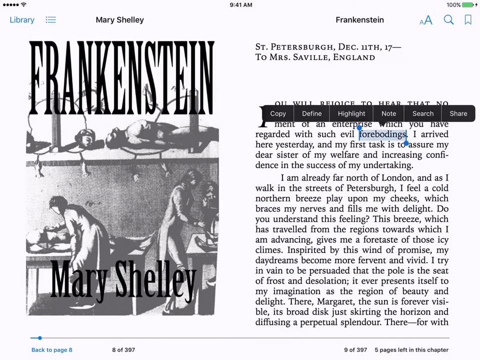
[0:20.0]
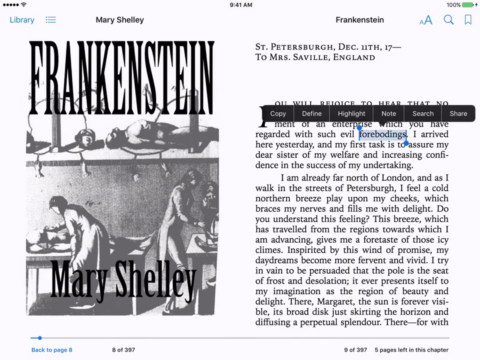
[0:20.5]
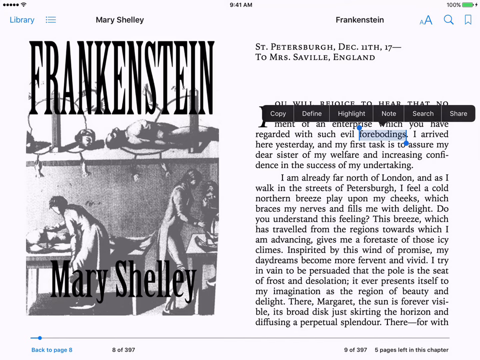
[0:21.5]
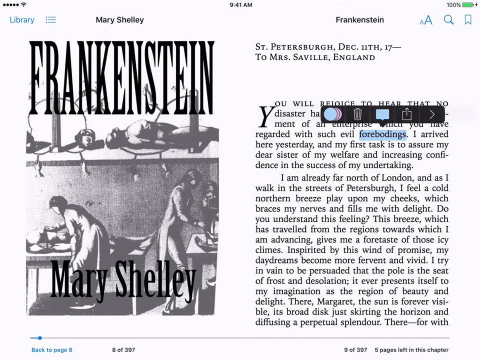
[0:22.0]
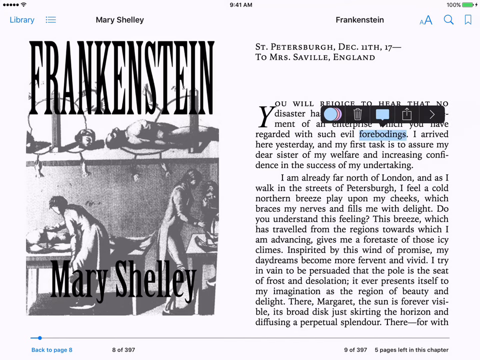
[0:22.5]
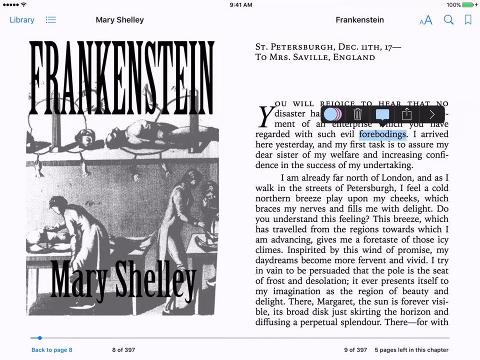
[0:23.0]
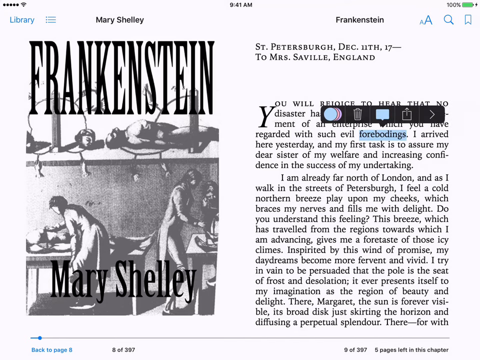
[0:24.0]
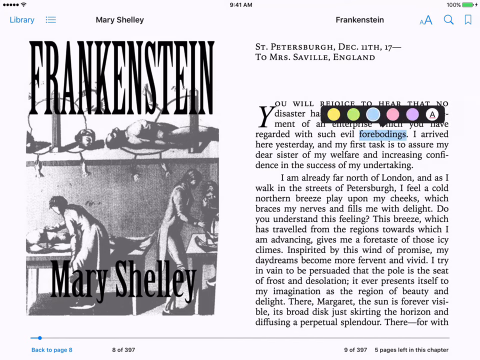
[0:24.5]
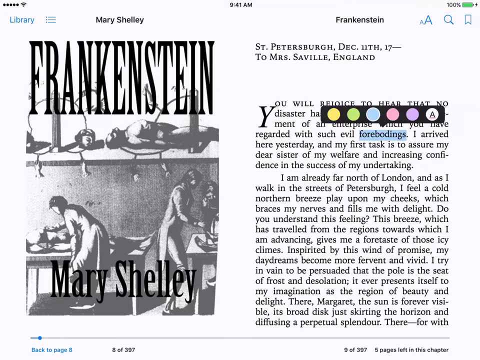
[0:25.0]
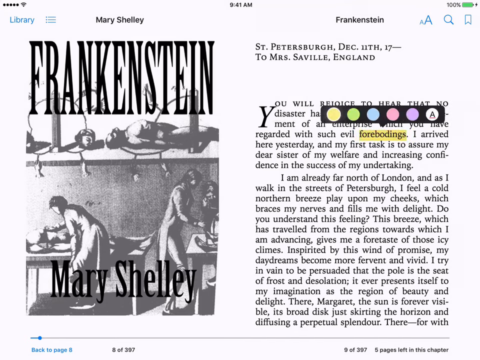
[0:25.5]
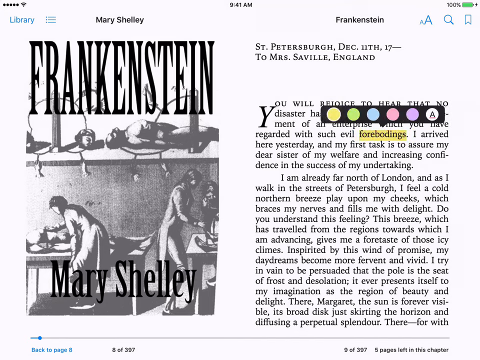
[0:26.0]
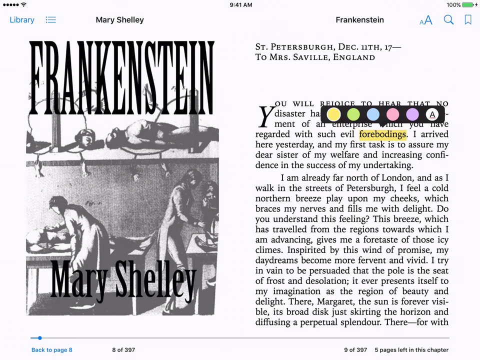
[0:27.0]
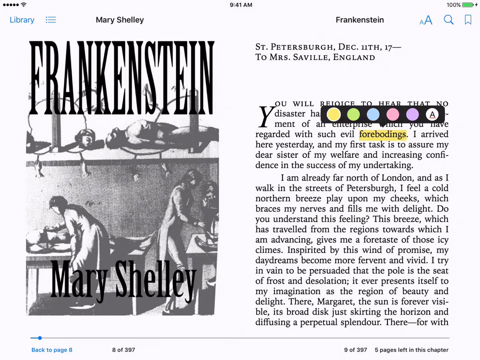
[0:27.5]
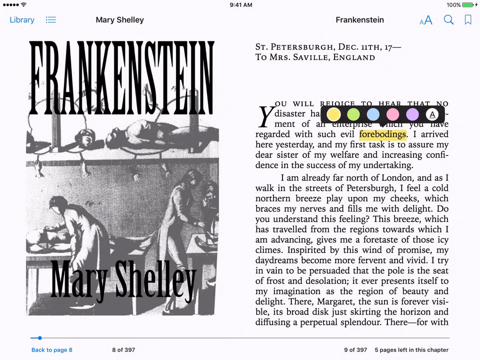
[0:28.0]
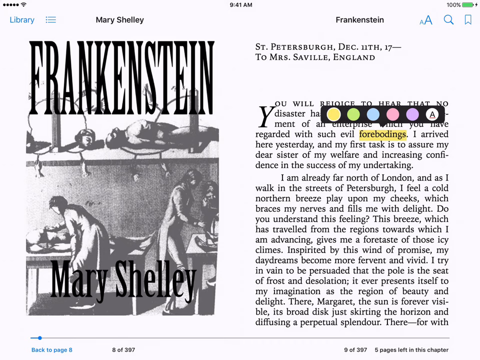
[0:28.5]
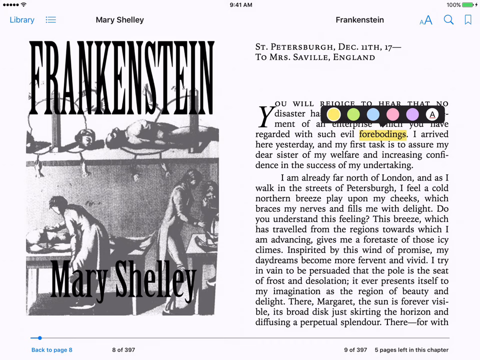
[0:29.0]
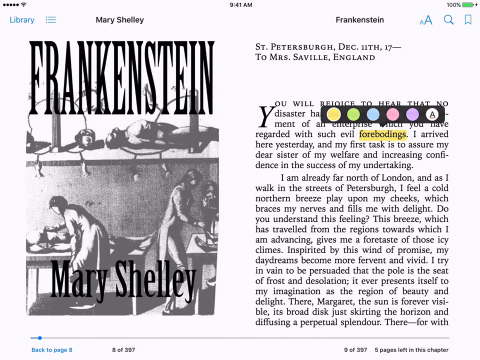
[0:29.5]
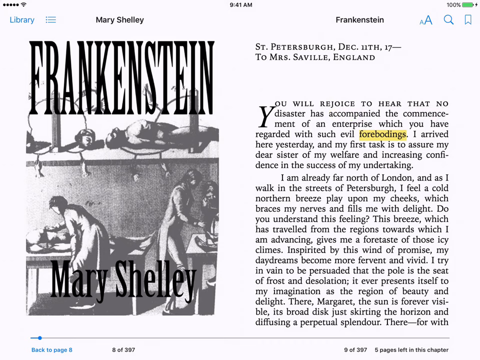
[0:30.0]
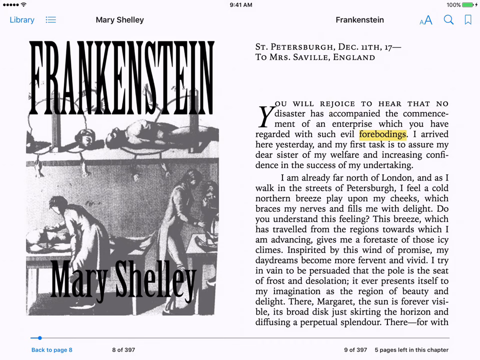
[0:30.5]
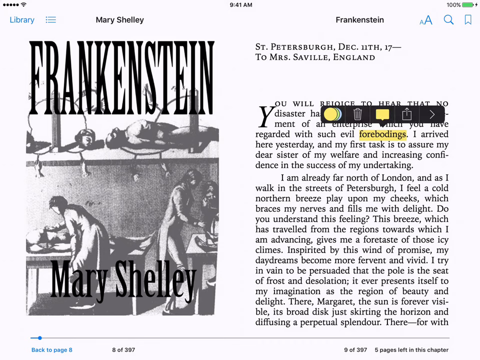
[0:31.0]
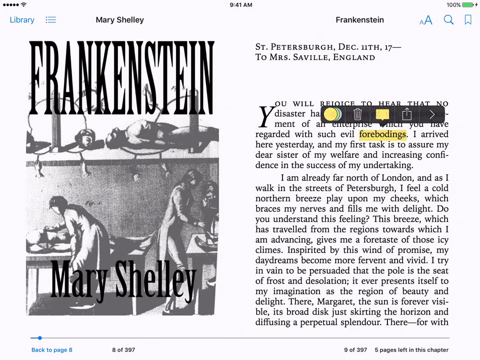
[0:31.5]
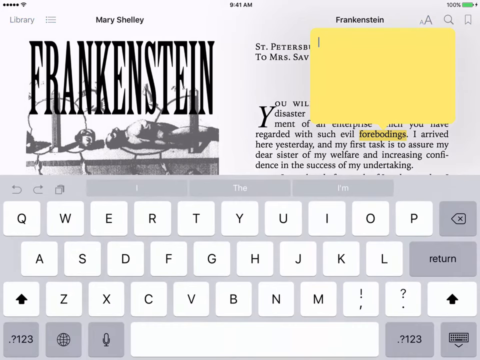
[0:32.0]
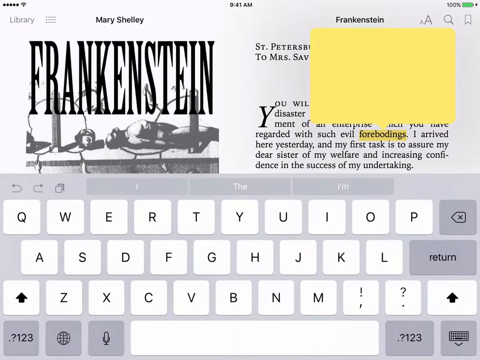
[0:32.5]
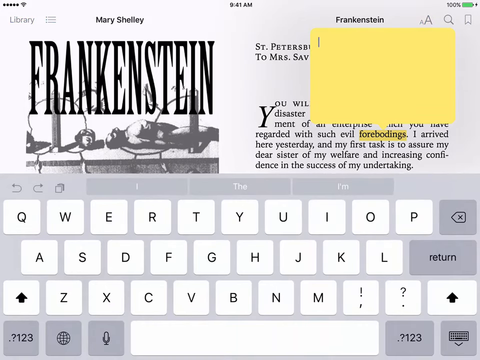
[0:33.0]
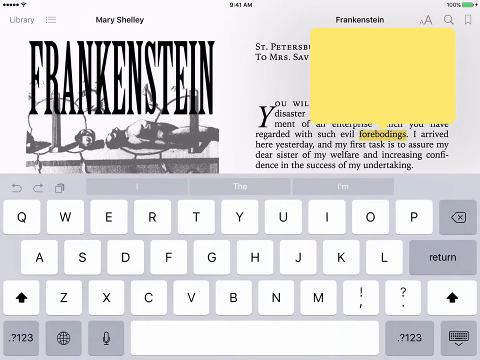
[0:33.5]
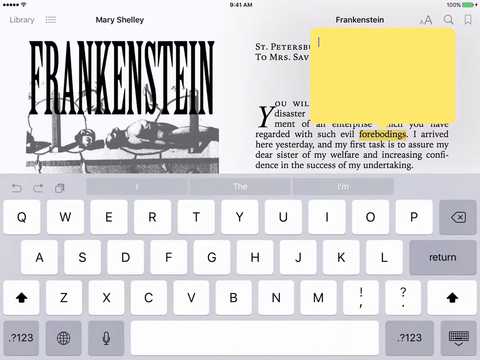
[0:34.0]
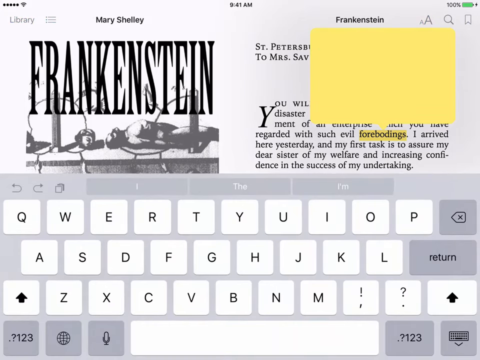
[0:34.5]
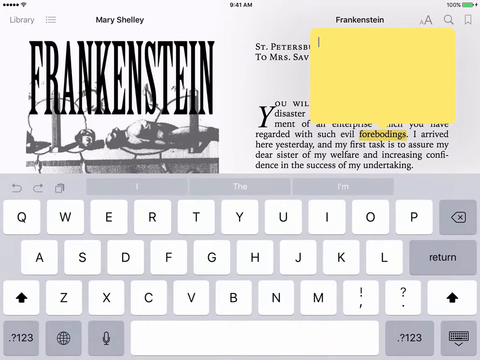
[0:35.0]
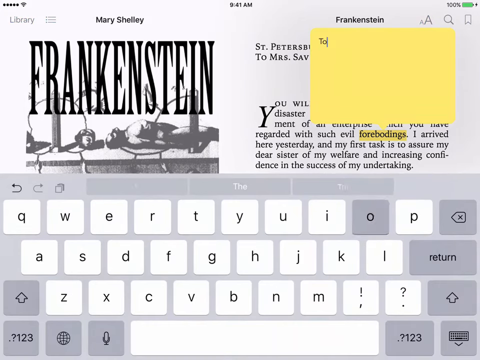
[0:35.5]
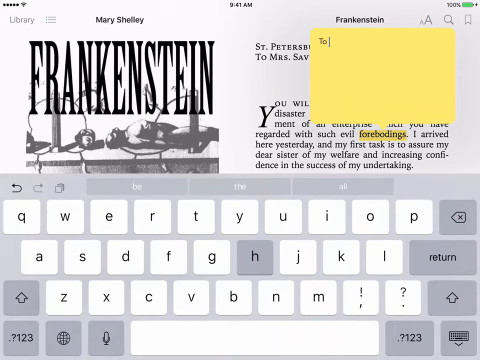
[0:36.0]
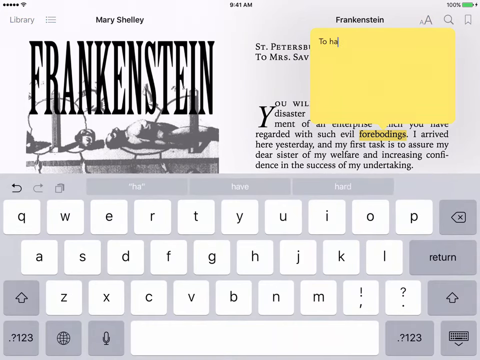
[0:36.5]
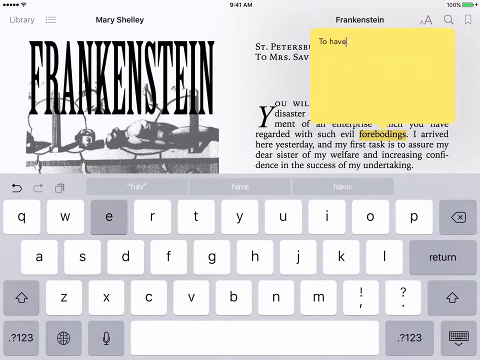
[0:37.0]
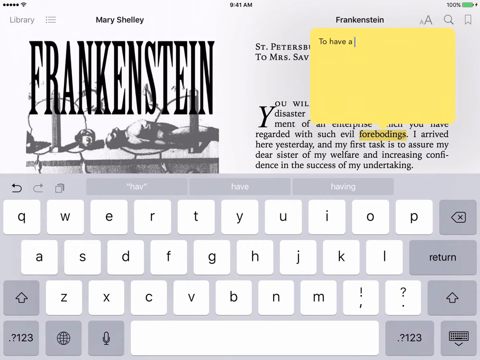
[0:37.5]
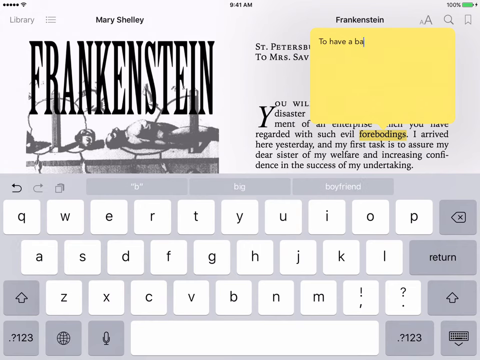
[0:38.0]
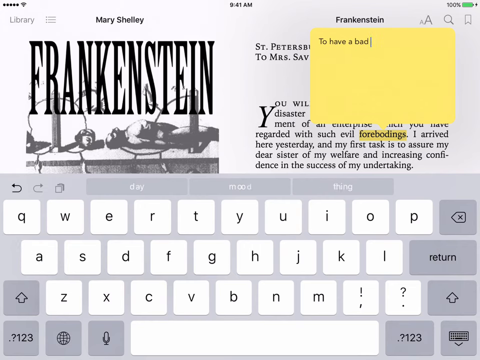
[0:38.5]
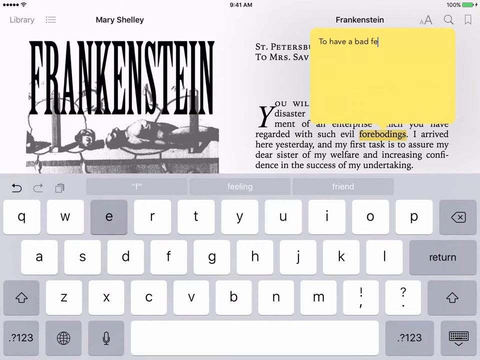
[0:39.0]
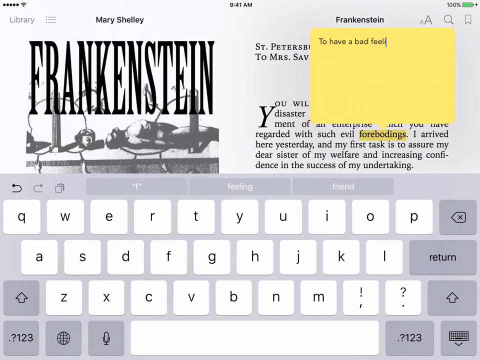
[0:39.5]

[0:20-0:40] As a word is selected, the options Copy, Define, Highlight, Note, Search and Share appear at the top of the page. Highlight is selected and different colors appear; blue is selected first, then it is changed to yellow, and the word is highlighted in yellow. The notes bar is selected and the meaning of the word is written: "to have a bad feeling." The word then appears blue again. The top of the screen shows the time, 9:41 AM, a battery at 100%, and a Wi-Fi connection with a strong signal. In the picture with the novel's title, there are people sleeping on tables, and others look like they are helping the sleeping ones. The people are on top, and it is unclear whether they are sleeping in a bed or somewhere else.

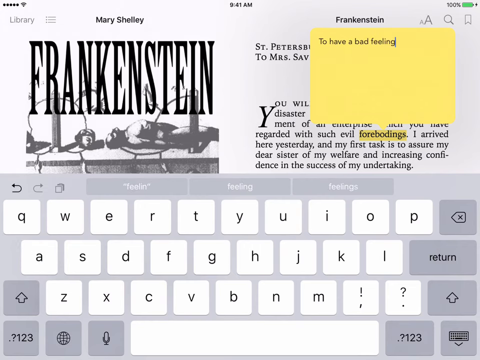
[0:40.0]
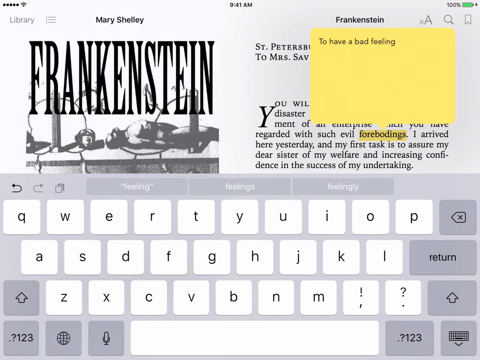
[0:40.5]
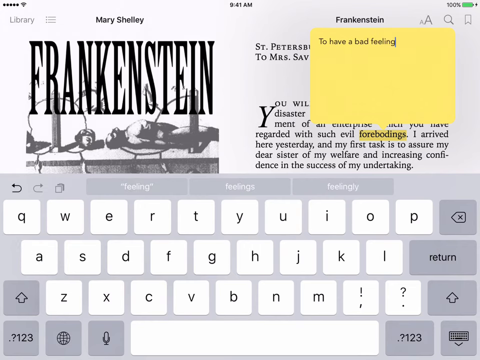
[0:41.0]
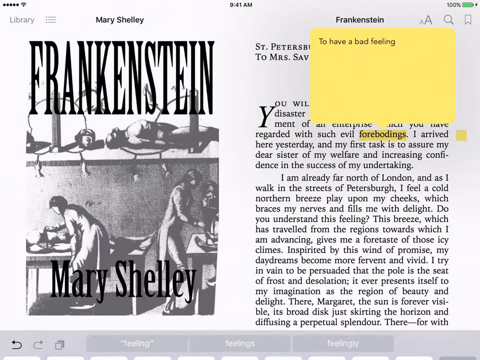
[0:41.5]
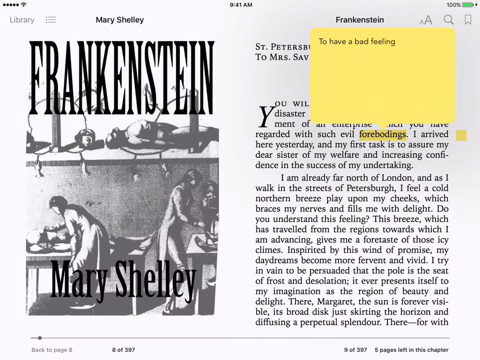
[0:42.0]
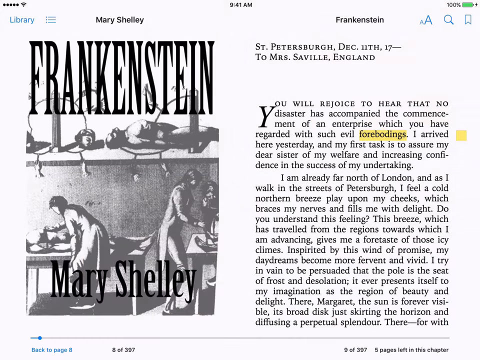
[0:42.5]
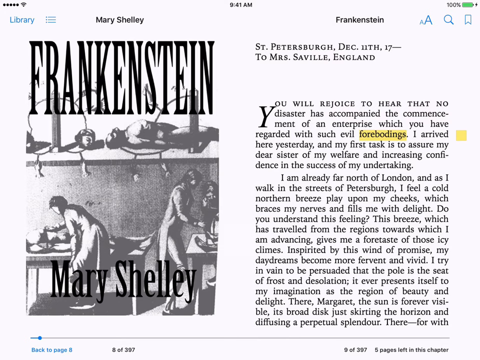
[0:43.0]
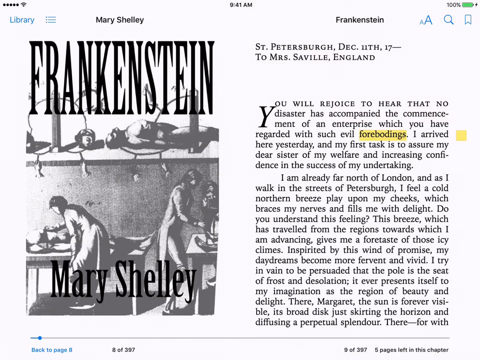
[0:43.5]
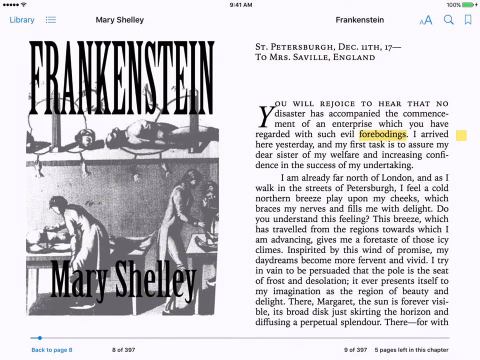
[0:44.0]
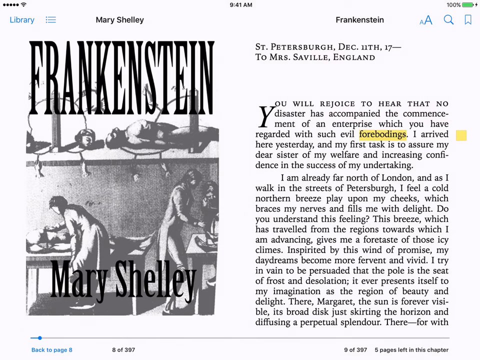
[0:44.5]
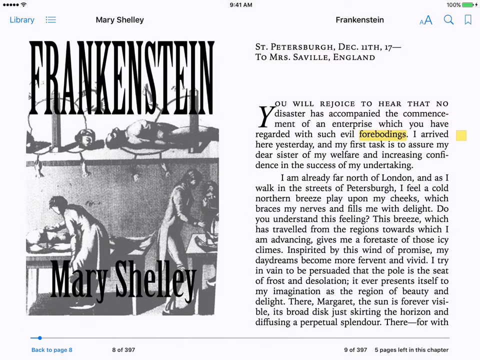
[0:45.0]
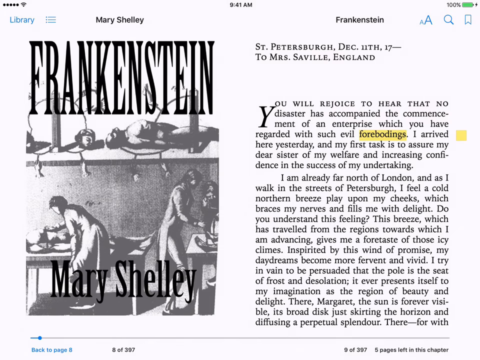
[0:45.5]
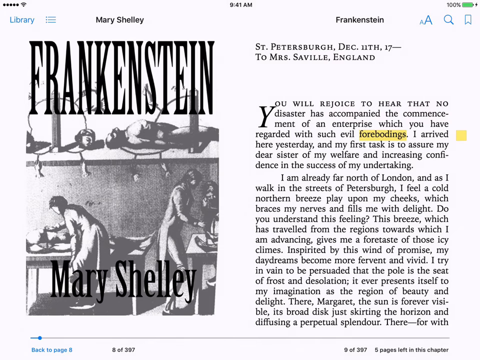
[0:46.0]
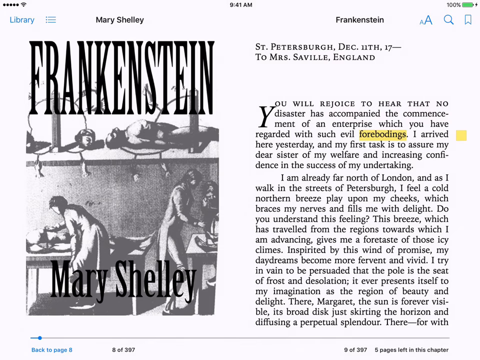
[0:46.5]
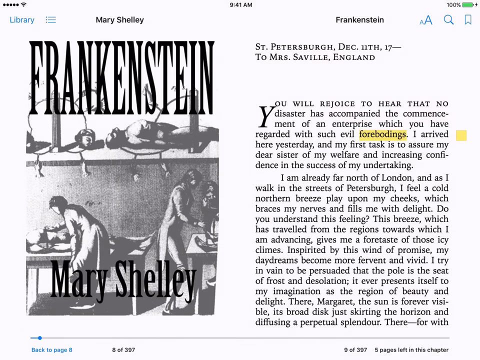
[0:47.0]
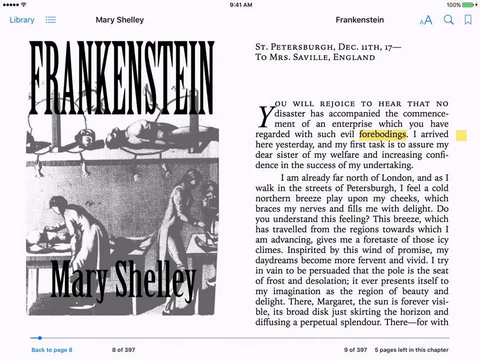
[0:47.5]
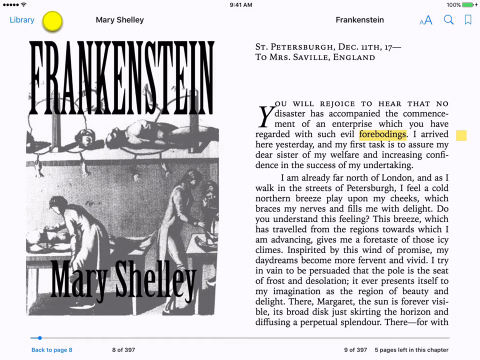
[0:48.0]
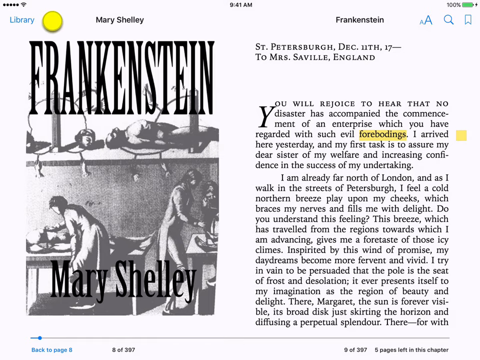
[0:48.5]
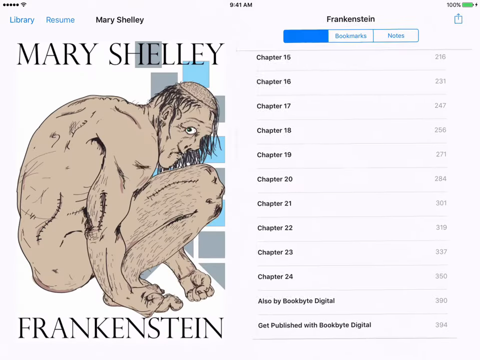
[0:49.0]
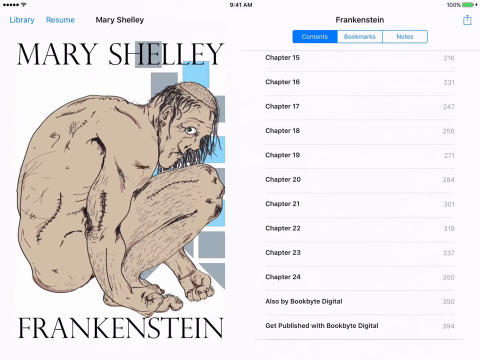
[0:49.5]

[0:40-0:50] The book's title is displayed. A yellow sticky note on the screen says "to have a bad feeling" and is associated with the word "foreboding." A keyboard is visible at the bottom of the screen, with words like "feeling" and "feelings" displayed in it. Library is selected, and a screen is shown with "Mary Shelley" at the top and a skeleton monster below it. The table of contents is visible on the right side, listing 15 chapters. The ebook appears to be open on a device, with navigation options like Library, Resumes, and Tabs.